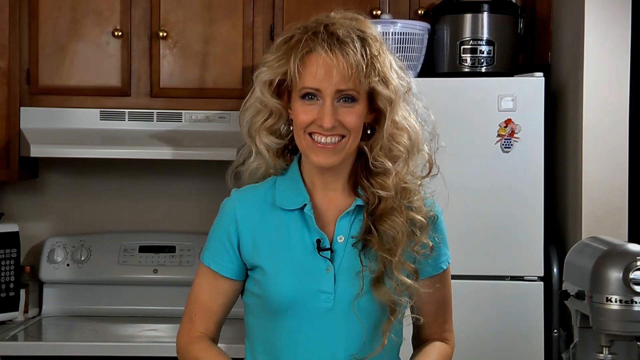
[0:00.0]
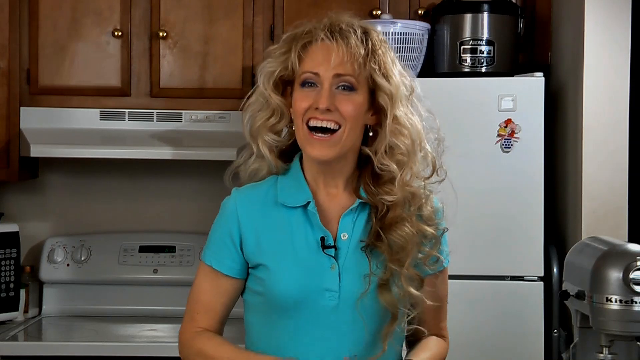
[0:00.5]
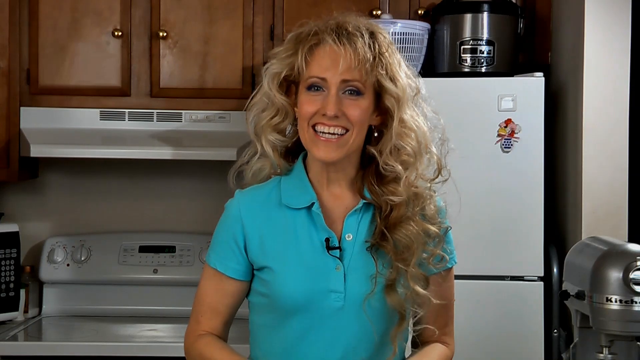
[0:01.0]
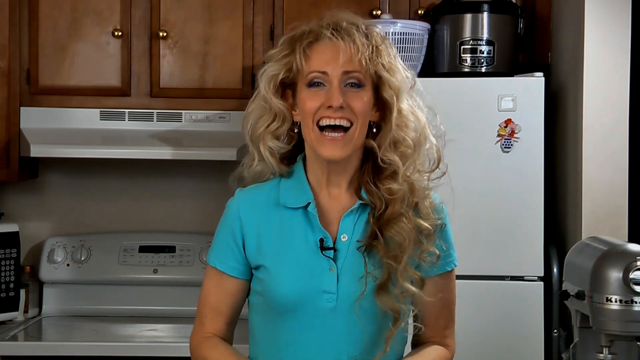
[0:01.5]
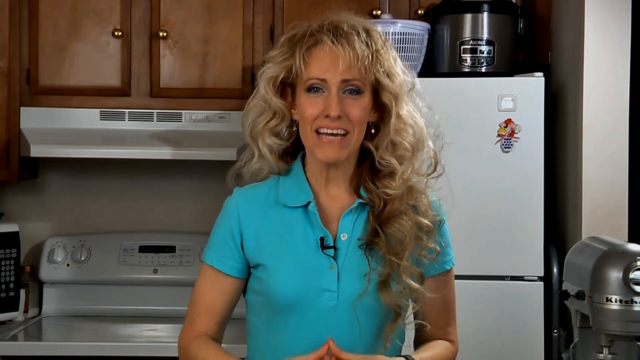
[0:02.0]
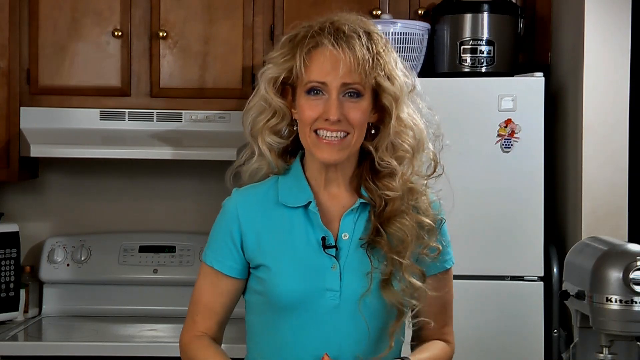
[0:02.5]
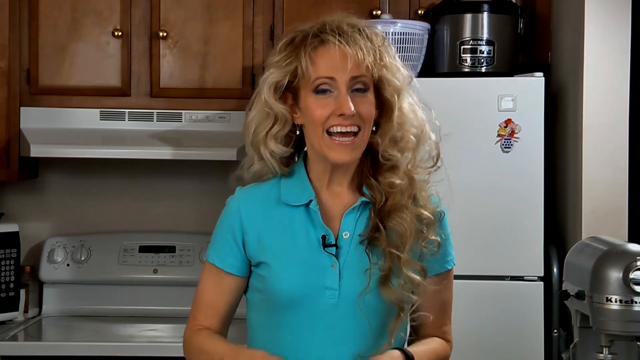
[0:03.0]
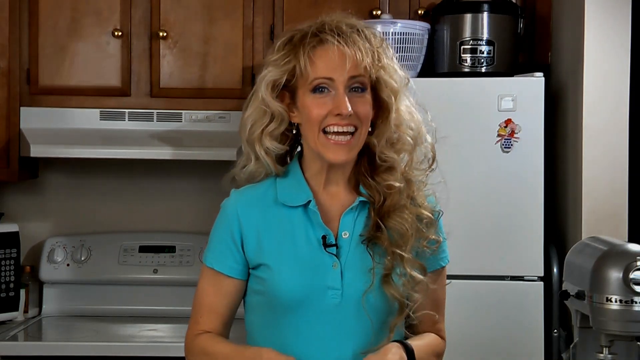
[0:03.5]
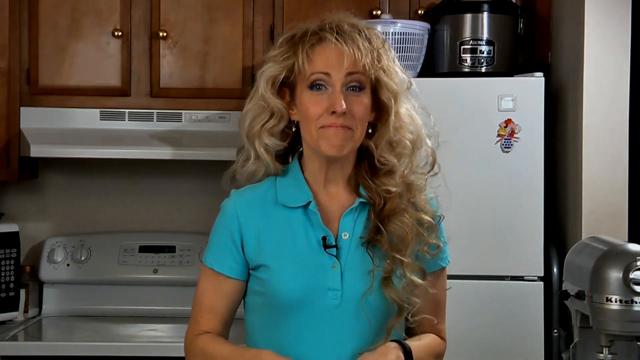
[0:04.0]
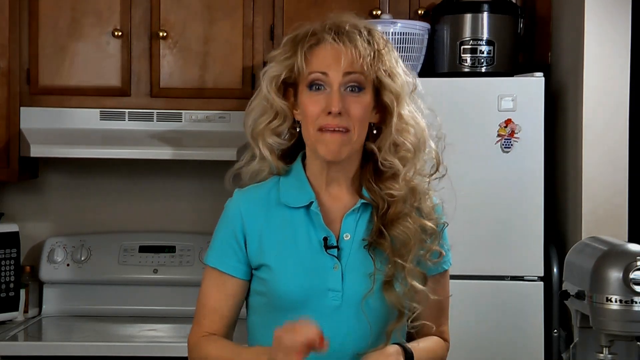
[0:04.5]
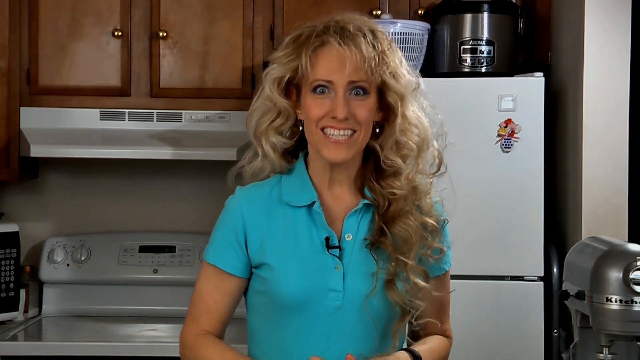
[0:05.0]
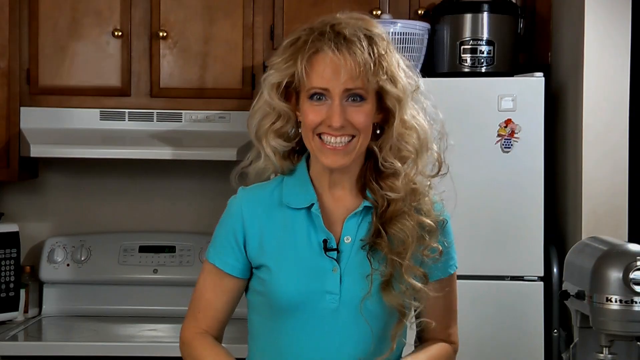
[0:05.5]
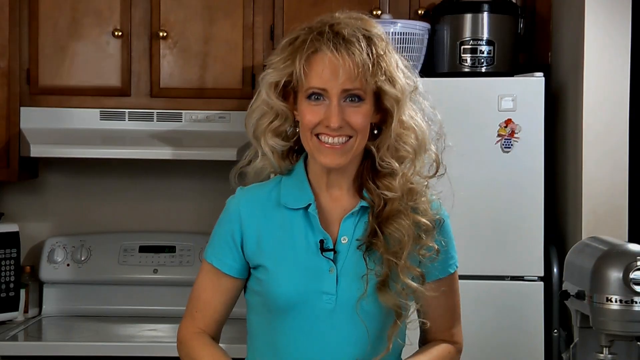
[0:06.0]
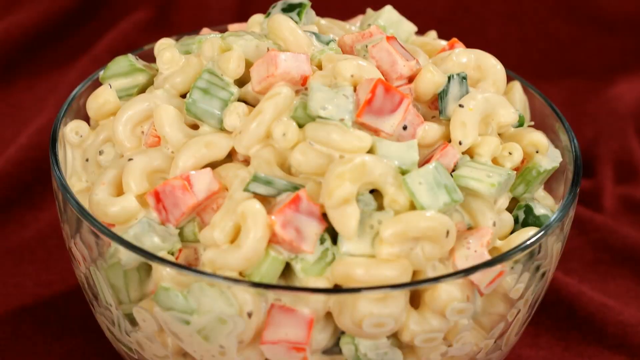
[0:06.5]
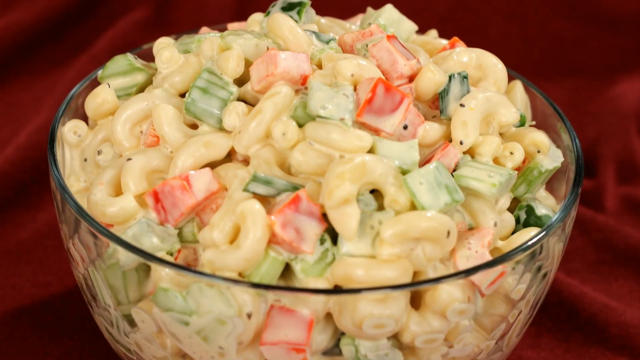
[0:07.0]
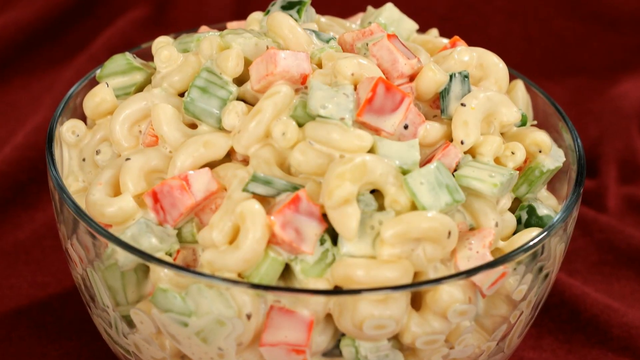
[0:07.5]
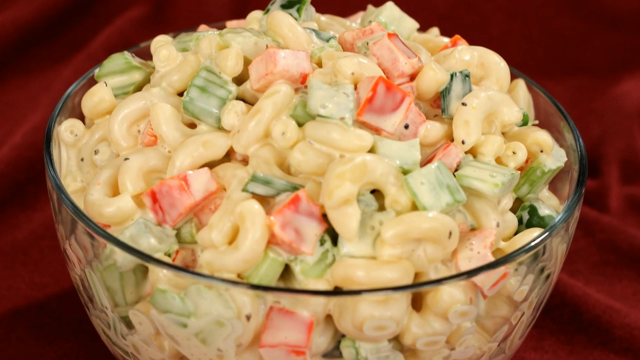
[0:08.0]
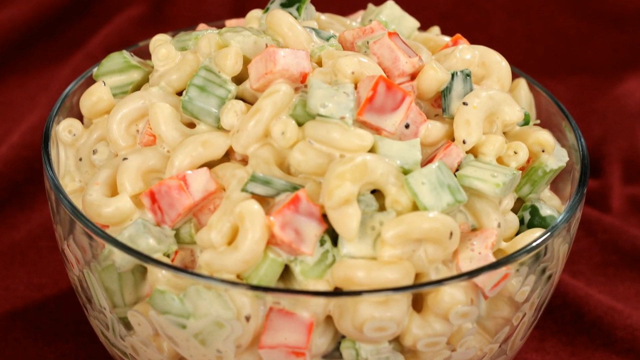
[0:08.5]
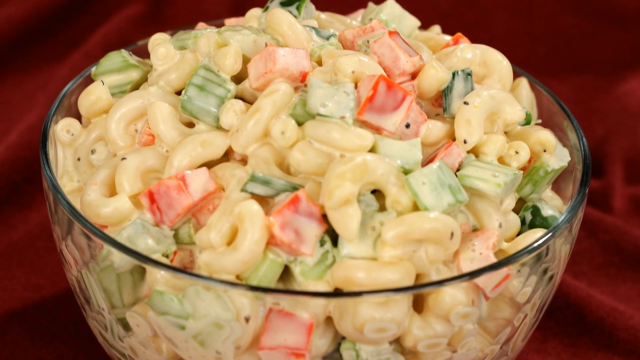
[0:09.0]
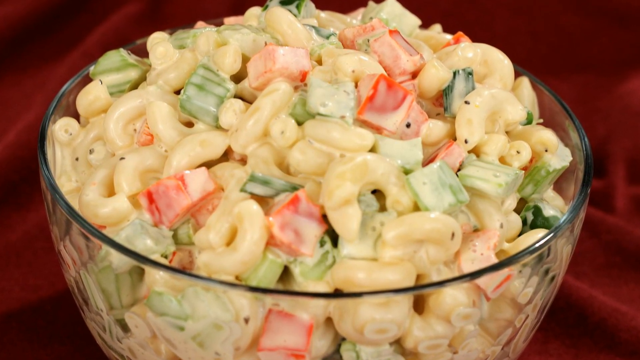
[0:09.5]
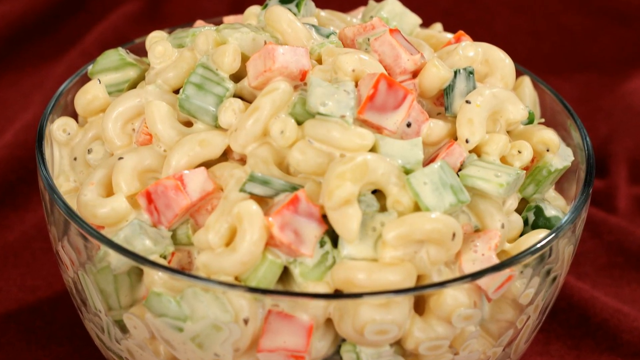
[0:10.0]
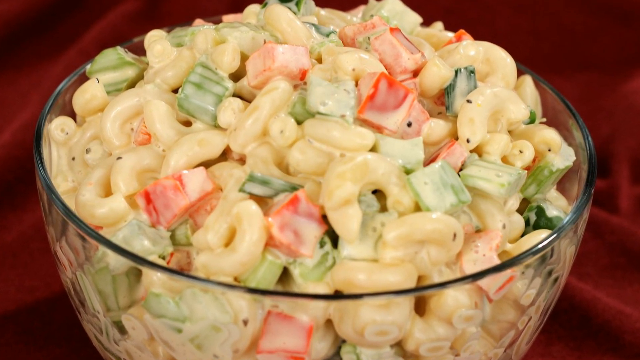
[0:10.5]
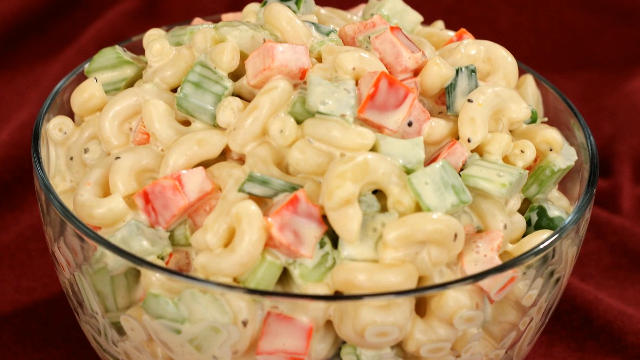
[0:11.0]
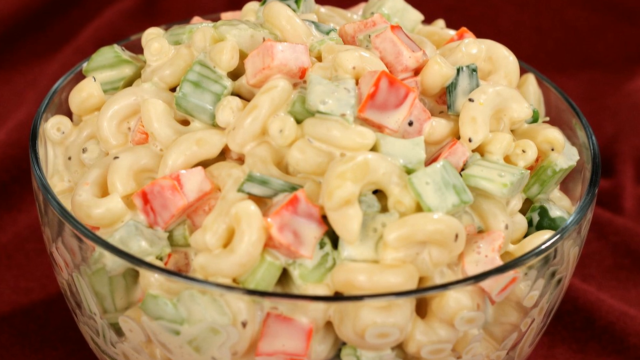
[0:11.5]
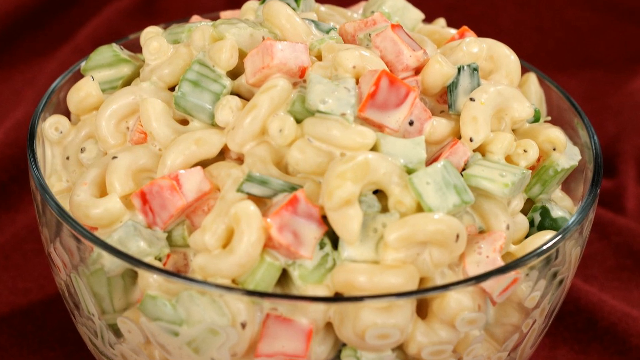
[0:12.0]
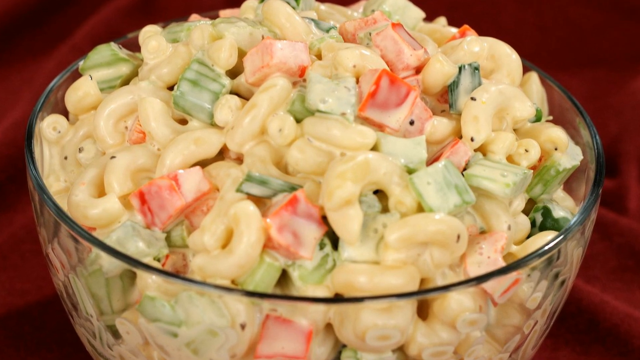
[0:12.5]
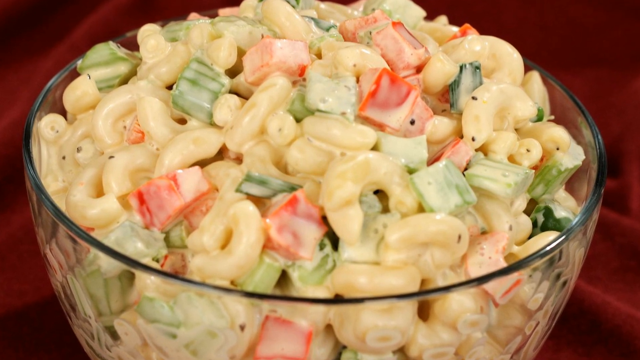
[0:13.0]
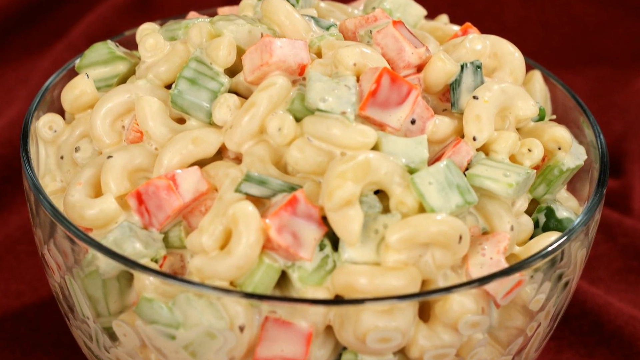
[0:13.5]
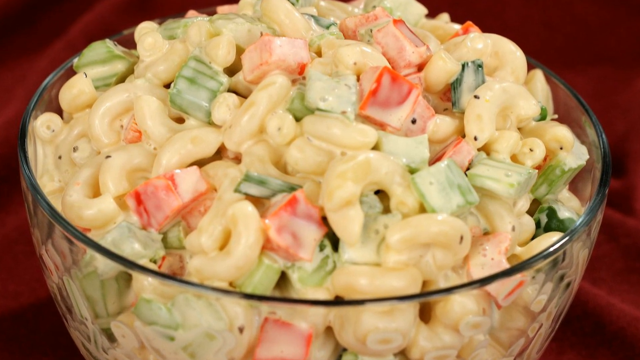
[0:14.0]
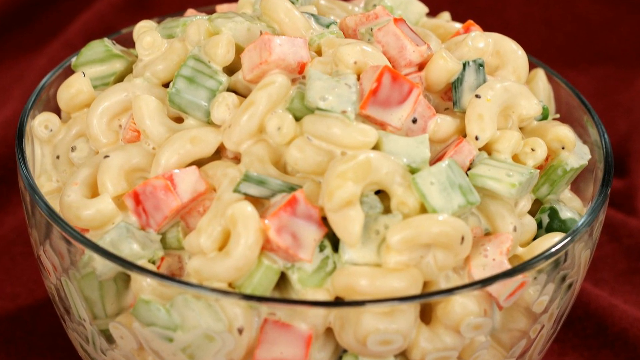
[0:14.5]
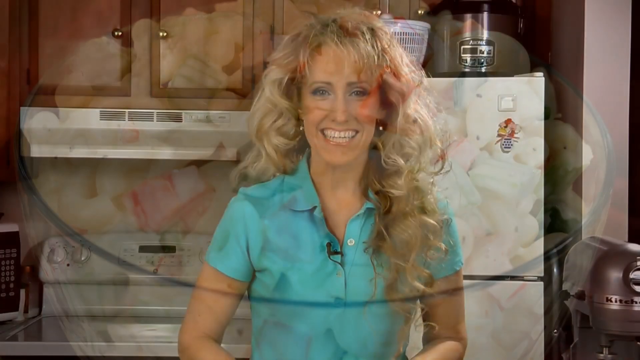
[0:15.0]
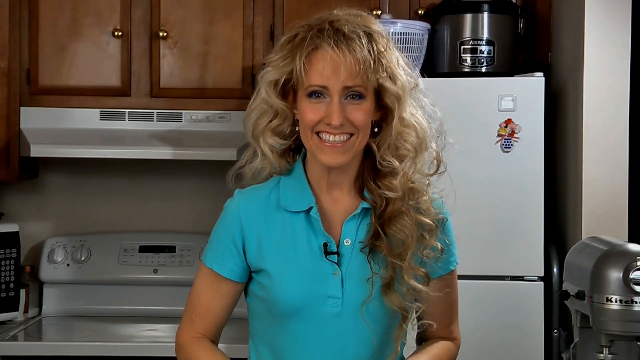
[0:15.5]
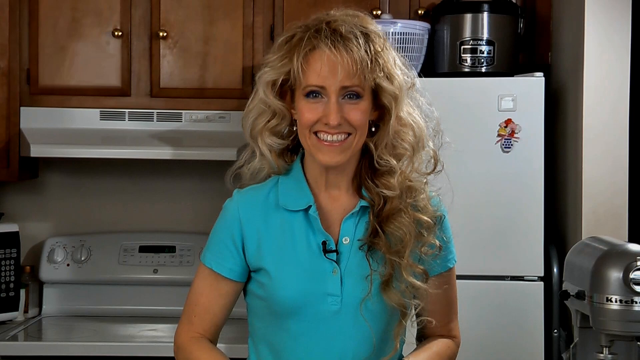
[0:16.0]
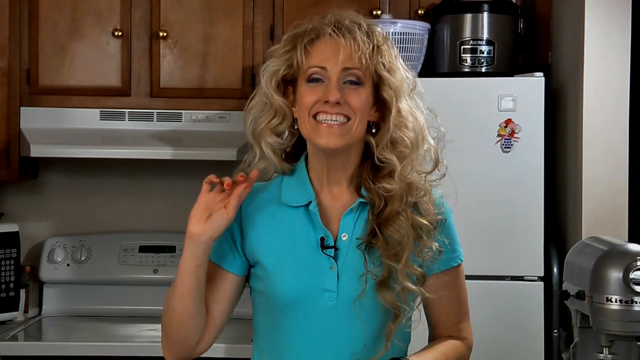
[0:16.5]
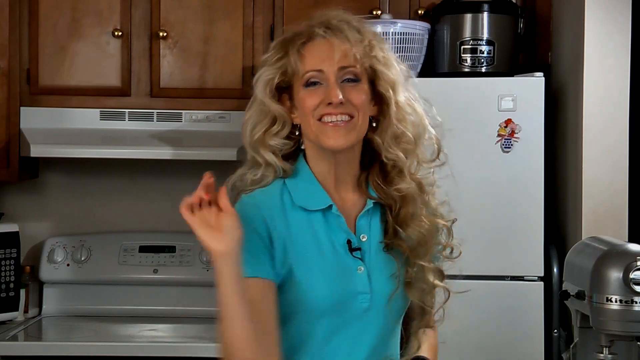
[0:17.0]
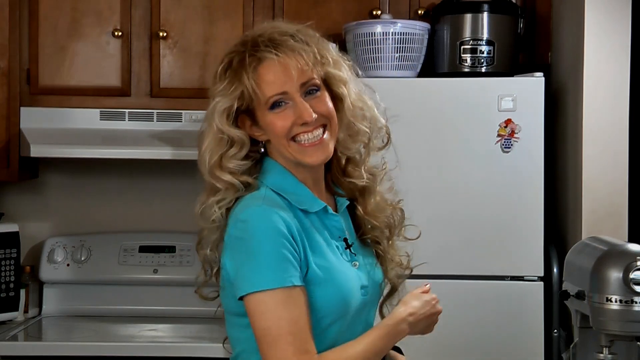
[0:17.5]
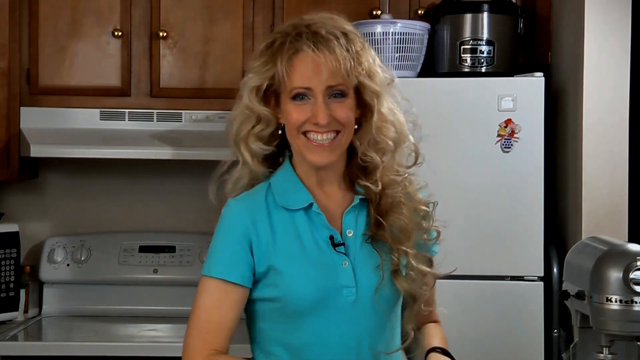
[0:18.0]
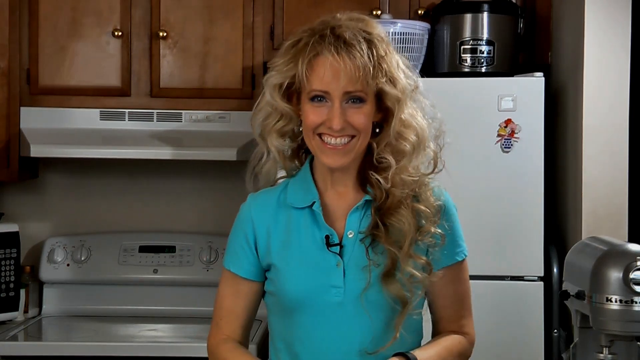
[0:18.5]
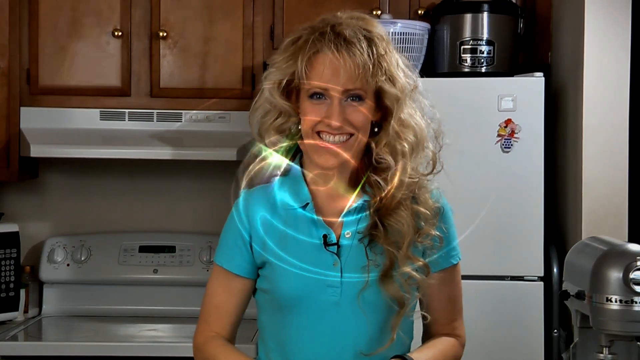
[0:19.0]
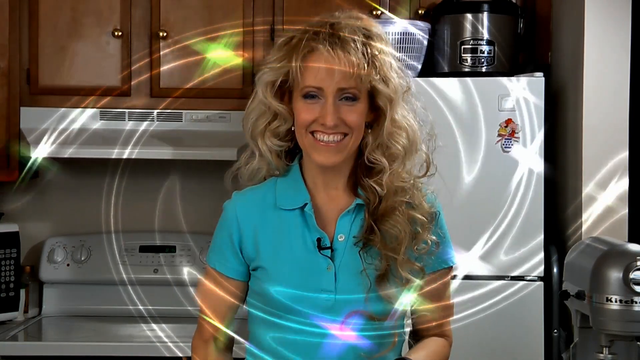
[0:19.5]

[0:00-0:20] A woman with curly blonde hair, wearing a light blue t-shirt and black earrings, appears on screen. She is standing behind the fridge and the stove. Next, food she has prepared is shown: macaroni, tomato, green onion and some herbs mixed with mayonnaise, in a bowl with a lid on top of a table. The camera zooms in on the food. The woman is then shown smiling at the camera; she looks to be in her late 40s, and she laughs to herself while talking about the food.